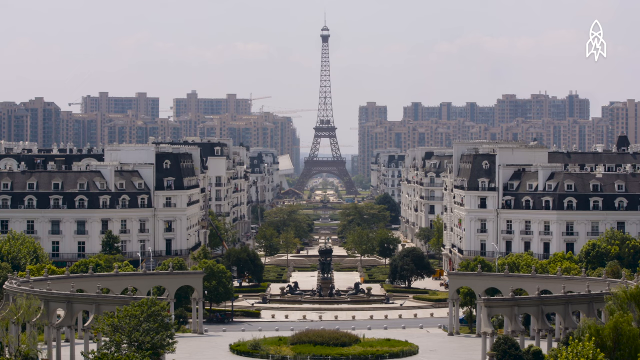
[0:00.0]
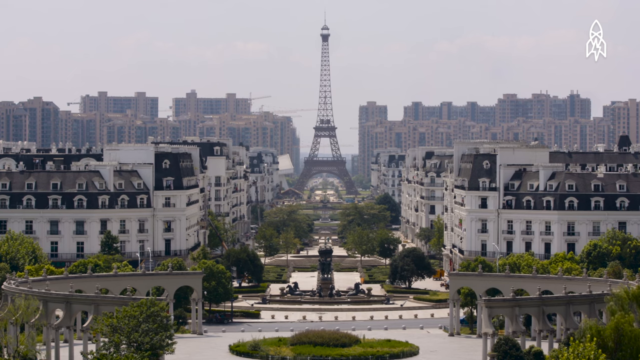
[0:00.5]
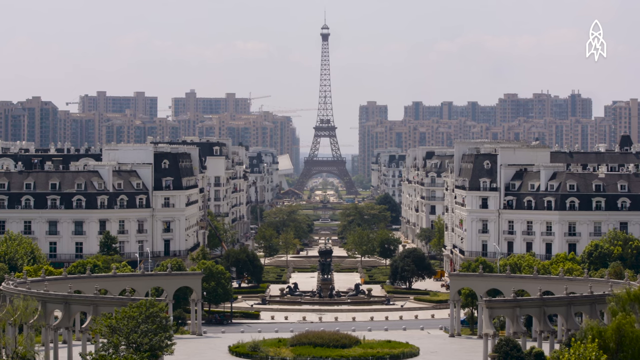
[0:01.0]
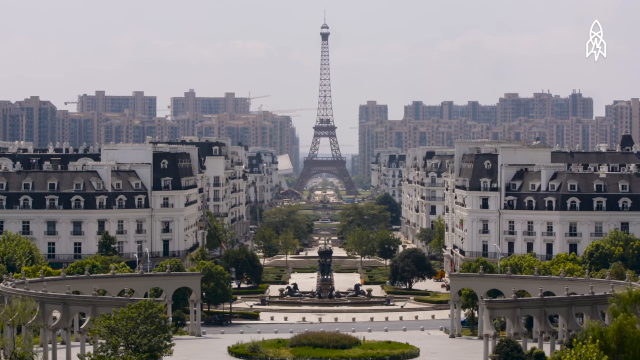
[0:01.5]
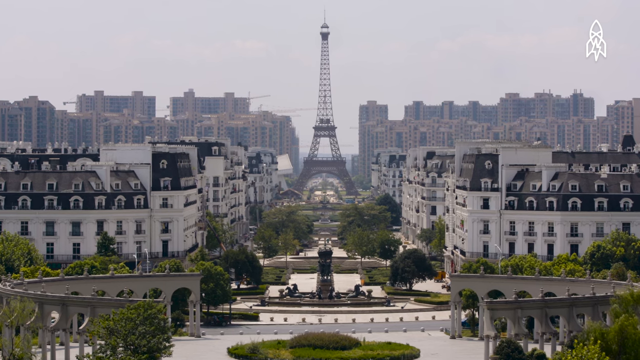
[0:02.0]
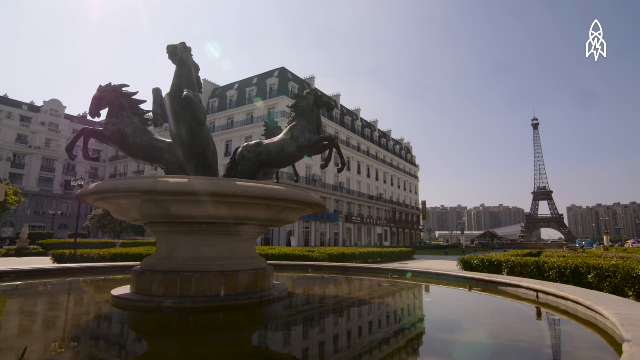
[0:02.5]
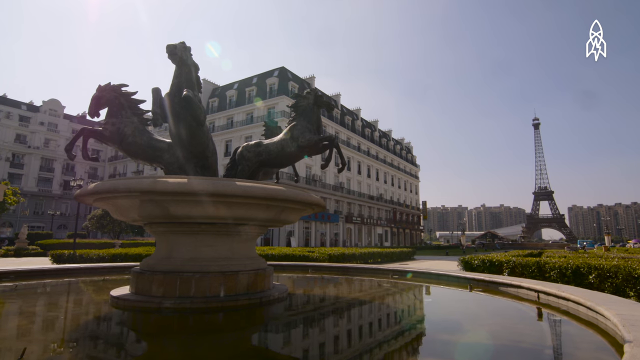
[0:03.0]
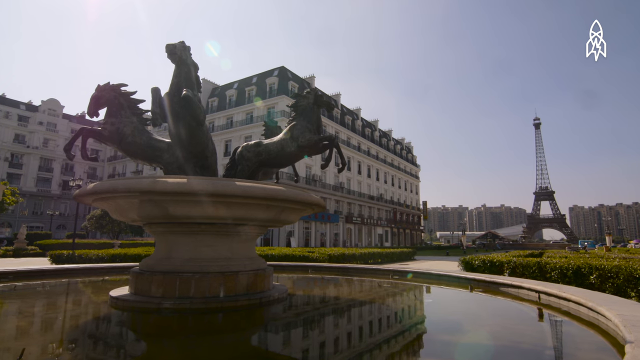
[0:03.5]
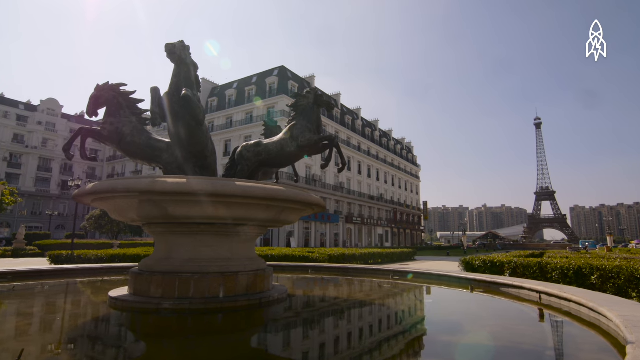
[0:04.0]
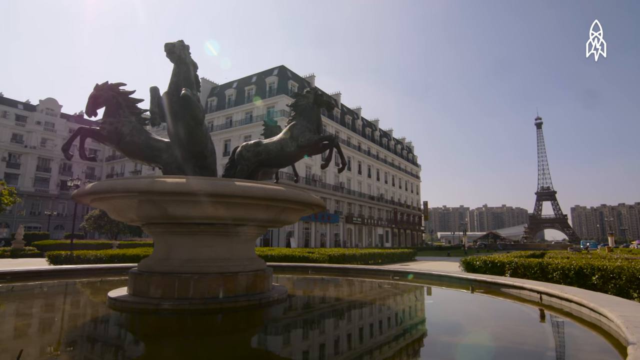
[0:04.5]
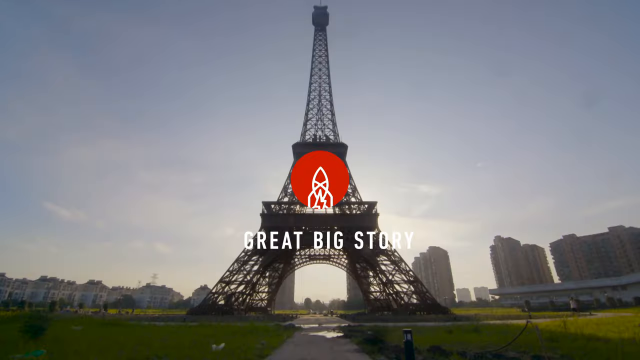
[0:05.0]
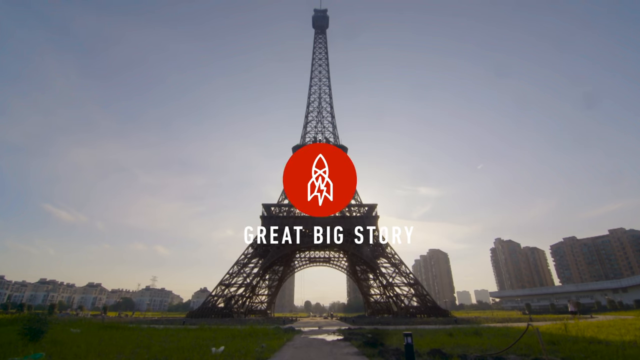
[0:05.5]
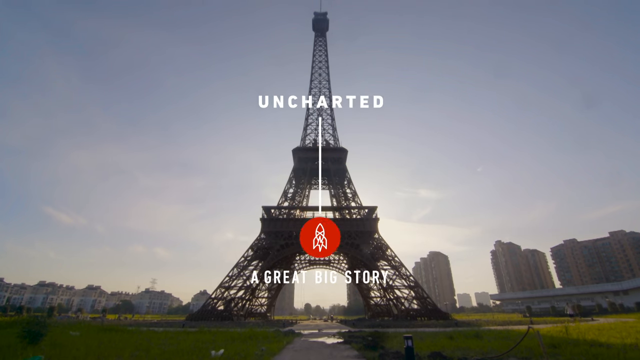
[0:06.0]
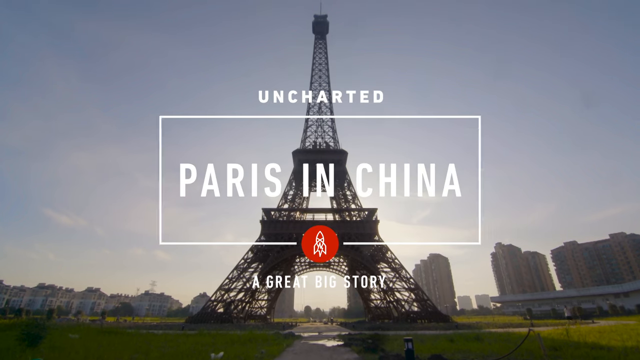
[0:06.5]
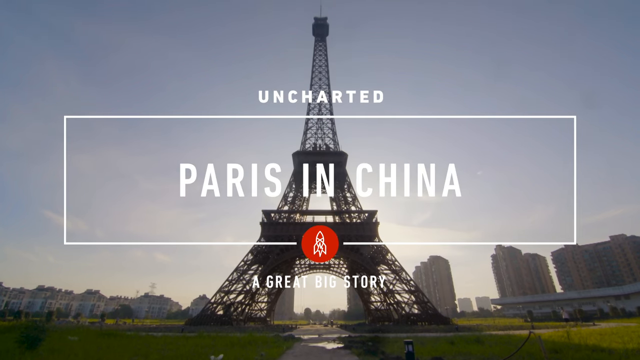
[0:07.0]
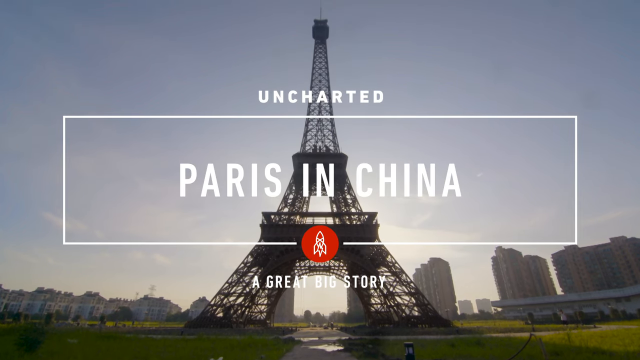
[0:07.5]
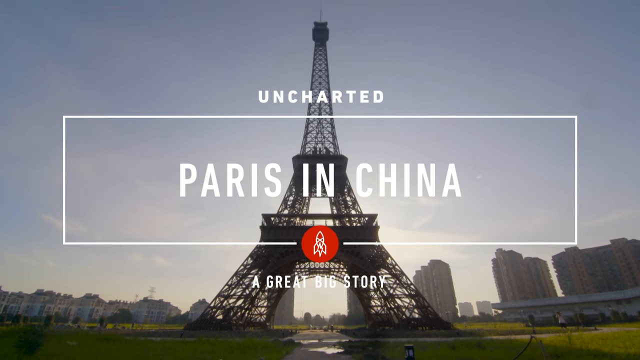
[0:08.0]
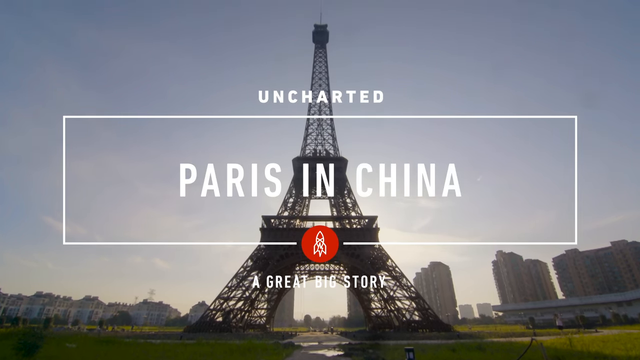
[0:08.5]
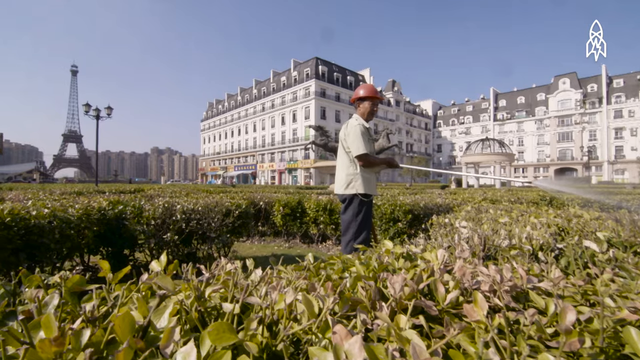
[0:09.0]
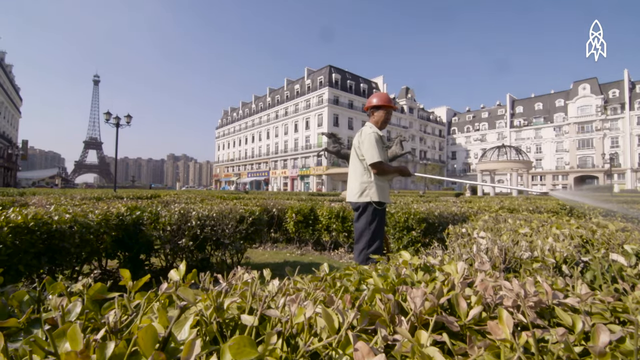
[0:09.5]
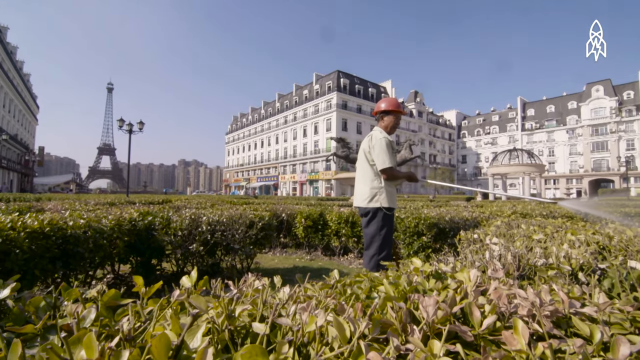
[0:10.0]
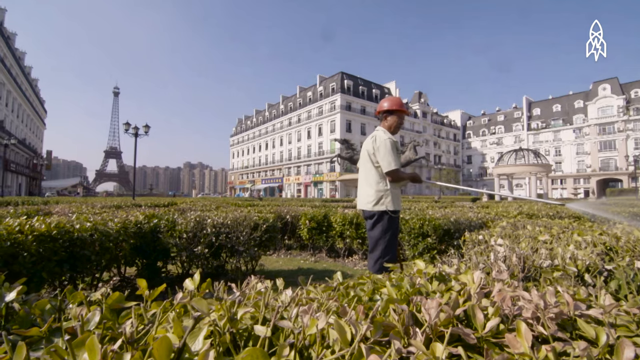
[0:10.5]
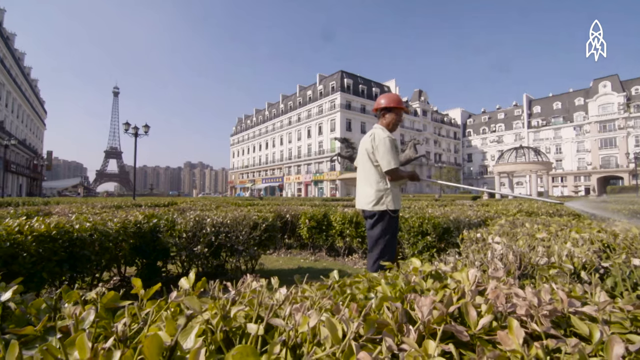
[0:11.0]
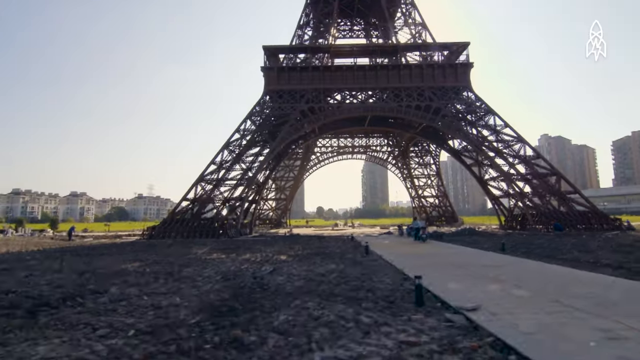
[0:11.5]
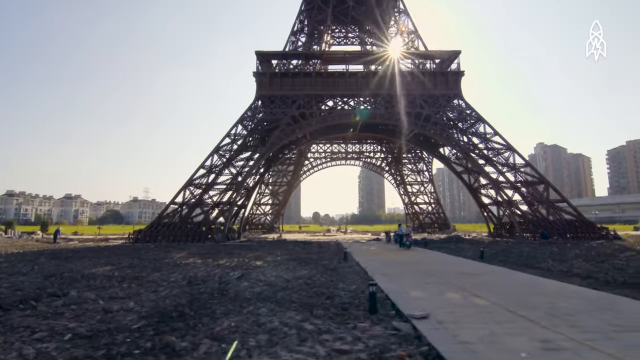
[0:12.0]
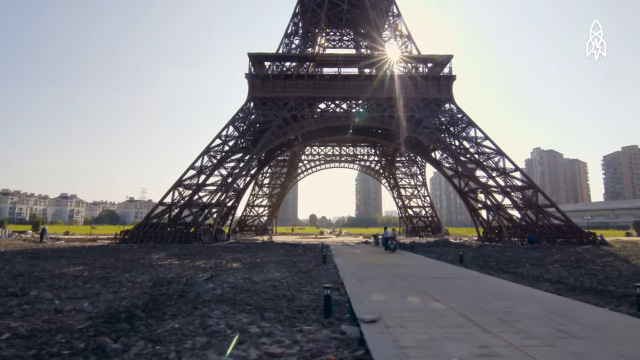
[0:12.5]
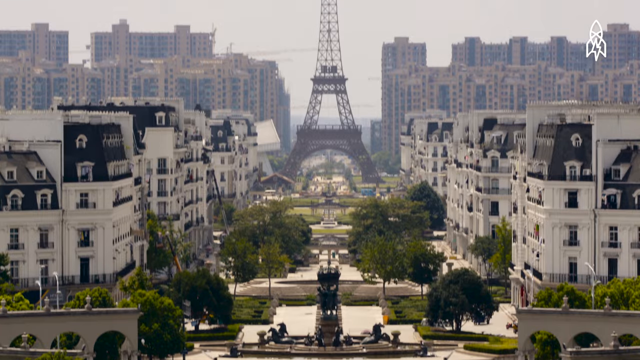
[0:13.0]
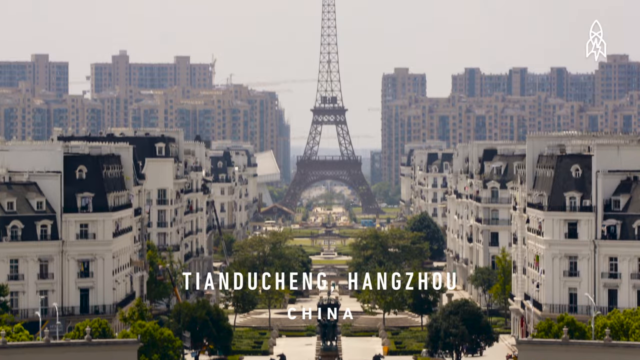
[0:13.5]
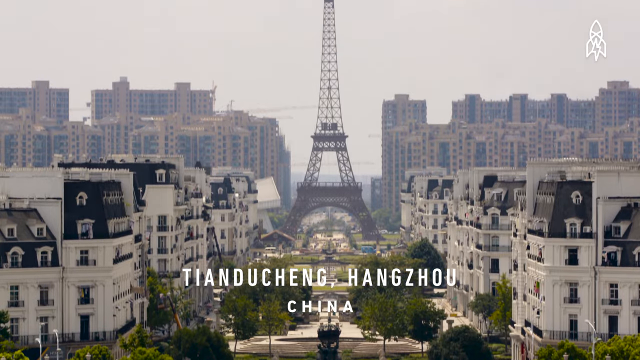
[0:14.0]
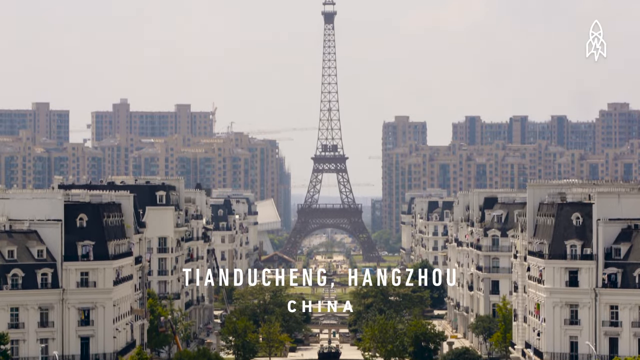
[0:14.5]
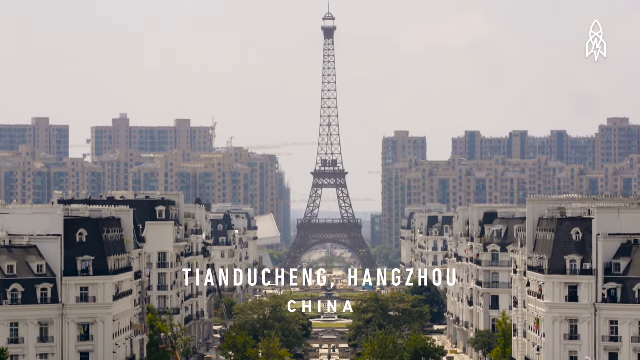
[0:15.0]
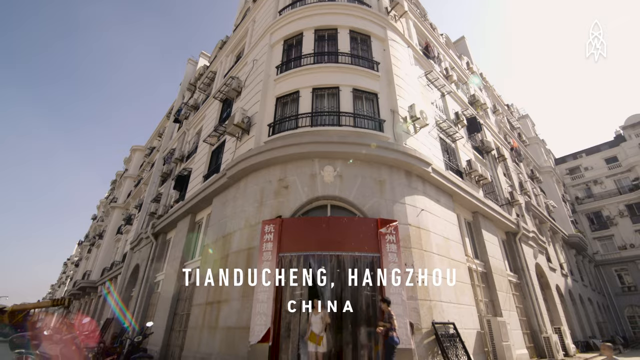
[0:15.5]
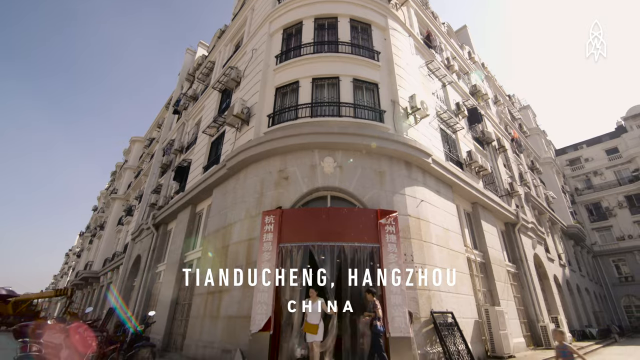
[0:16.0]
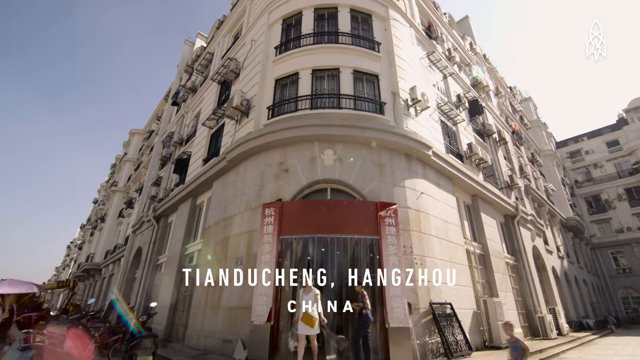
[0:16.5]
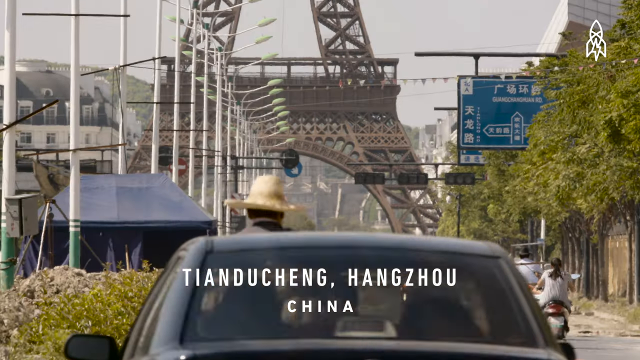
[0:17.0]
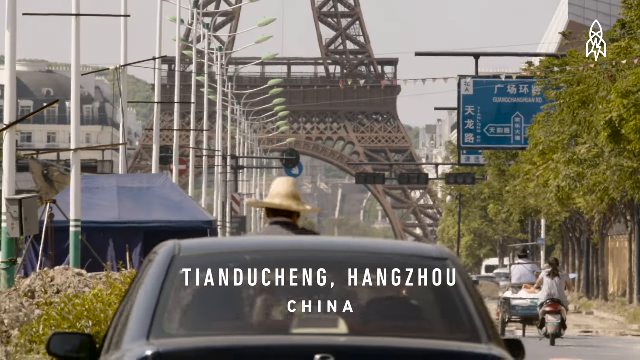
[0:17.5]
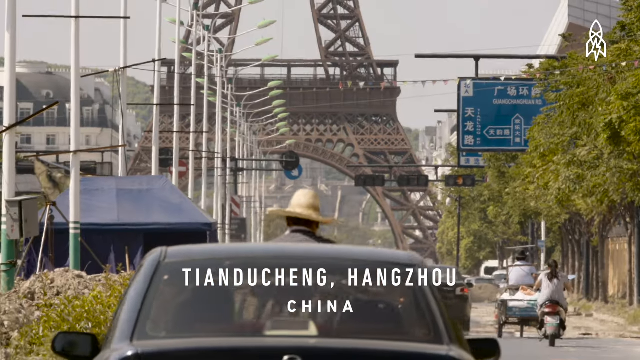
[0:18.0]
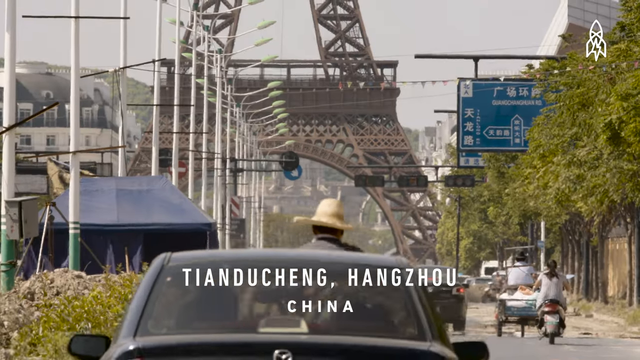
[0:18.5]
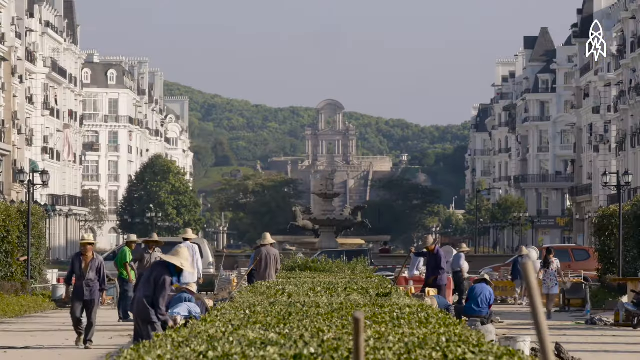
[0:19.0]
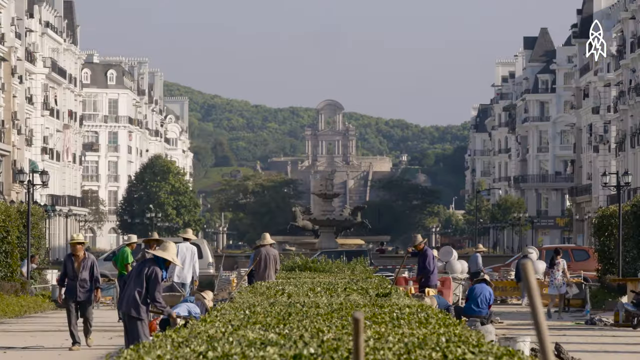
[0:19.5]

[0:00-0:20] A far-away shot, apparently a drone shot, looks at what appears to be the Eiffel Tower, with a large, long, wide street or alleyway running down each side of it. The next shot is a close-up of the base of the tower, where people are lounging underneath it, seemingly picnicking. Text then reads "Paris in China", revealing that this is not the real Eiffel Tower but a smaller replica built in China that appears to be an exact copy. An overlay of text reads "China". Many Chinese people tend to gardens all around the area, and there are replicas of some of the statues found around the Eiffel Tower. Gardeners tend to all of the plant life. The area seems to be a lively one for shopping and for locals; there do not appear to be many tourists, but there are many locals. Text reads "uncharted Paris in China".